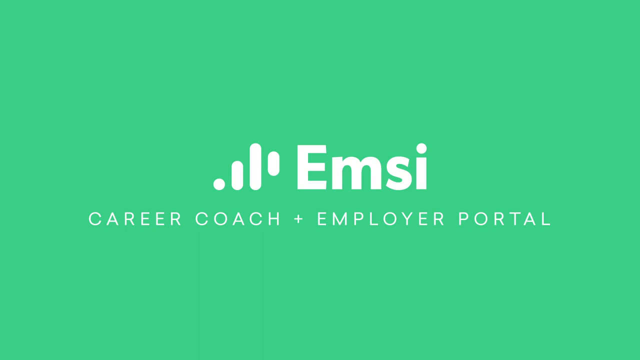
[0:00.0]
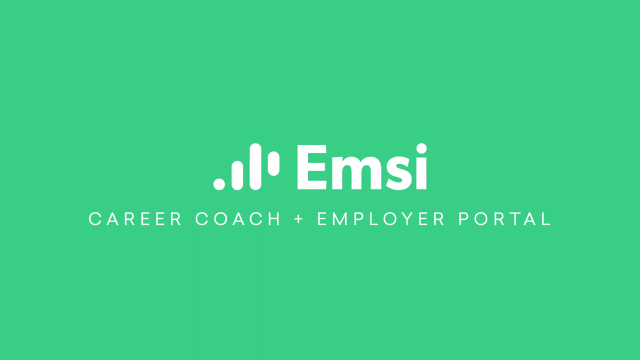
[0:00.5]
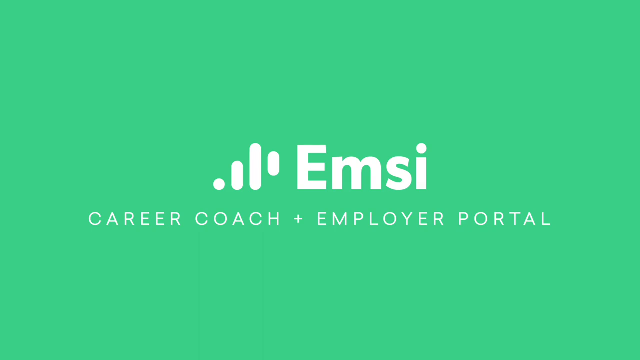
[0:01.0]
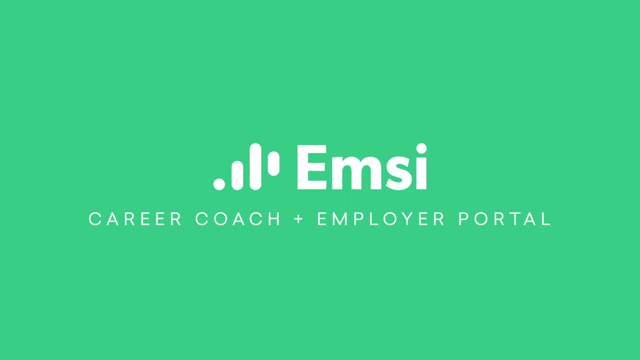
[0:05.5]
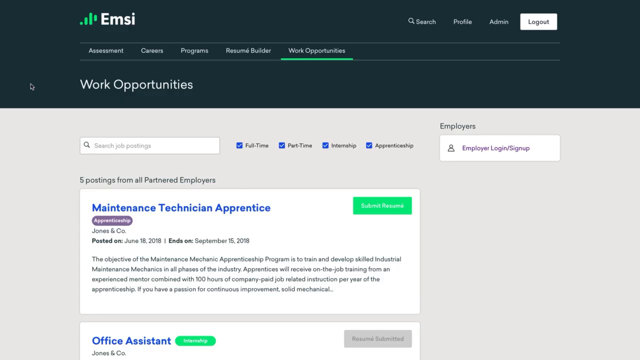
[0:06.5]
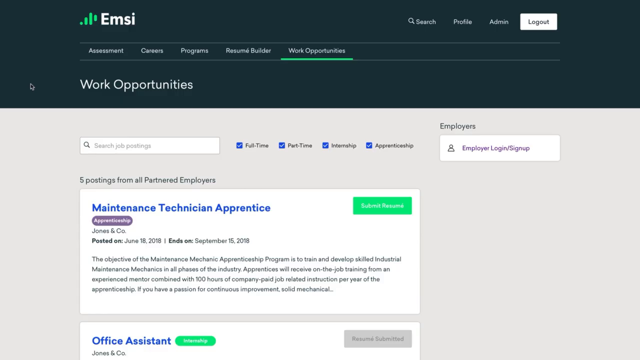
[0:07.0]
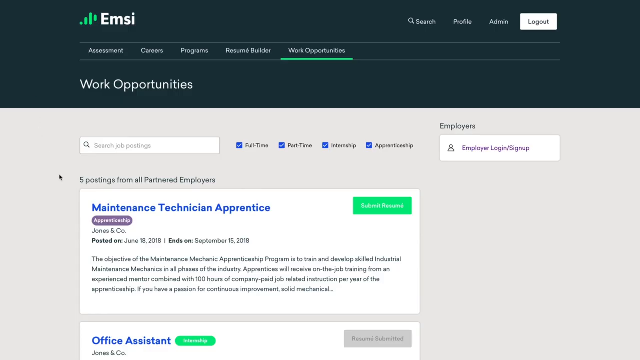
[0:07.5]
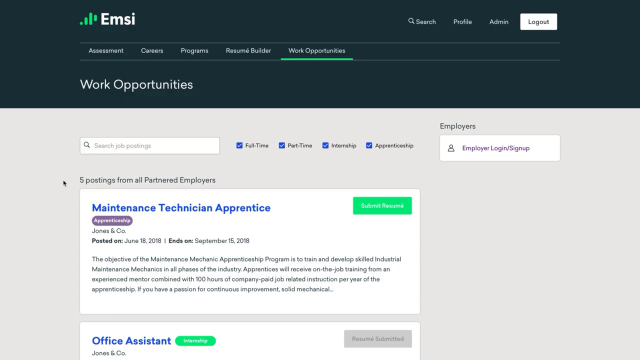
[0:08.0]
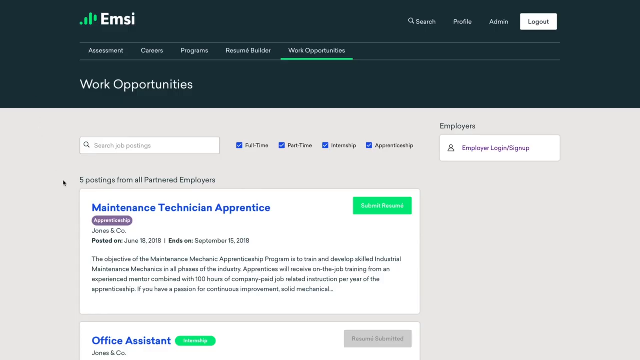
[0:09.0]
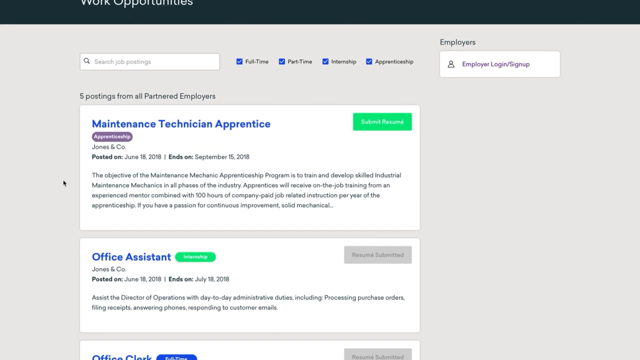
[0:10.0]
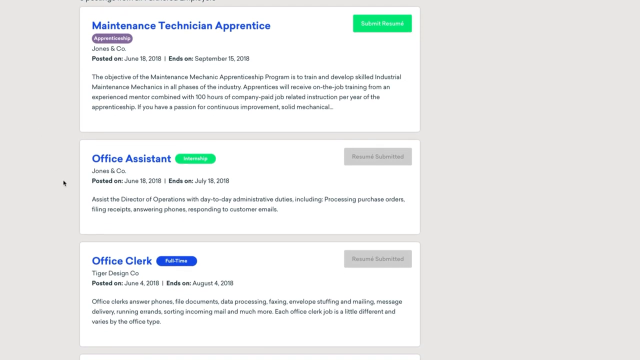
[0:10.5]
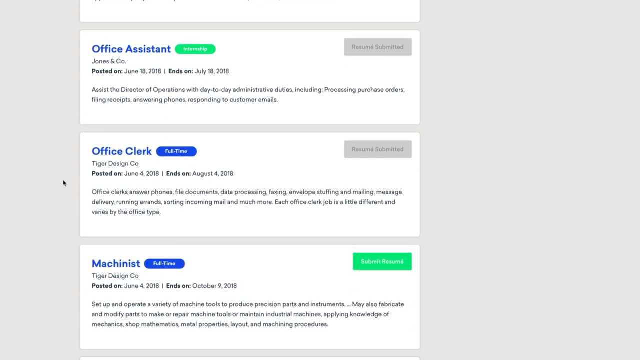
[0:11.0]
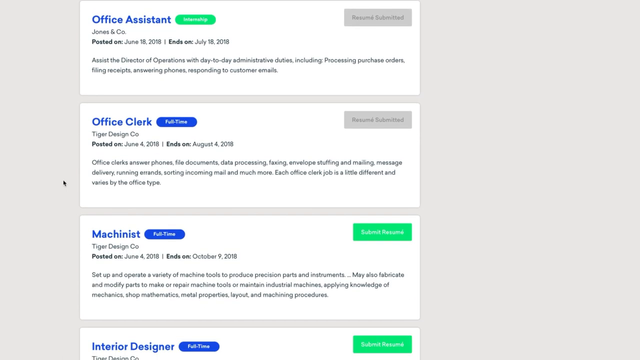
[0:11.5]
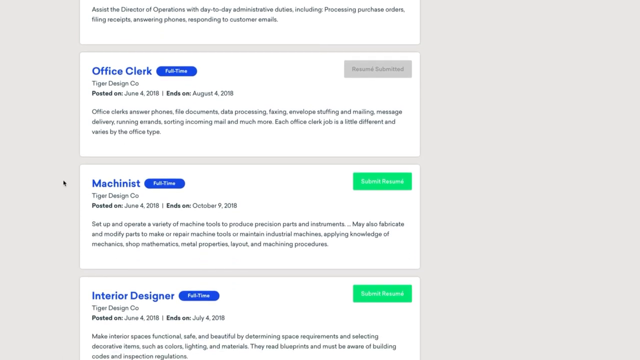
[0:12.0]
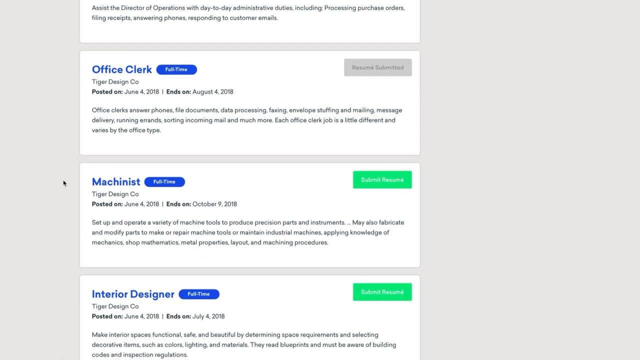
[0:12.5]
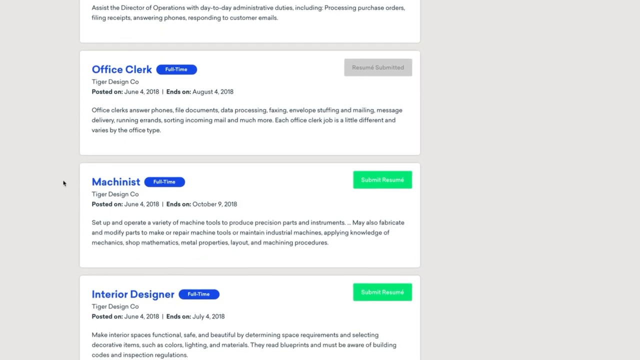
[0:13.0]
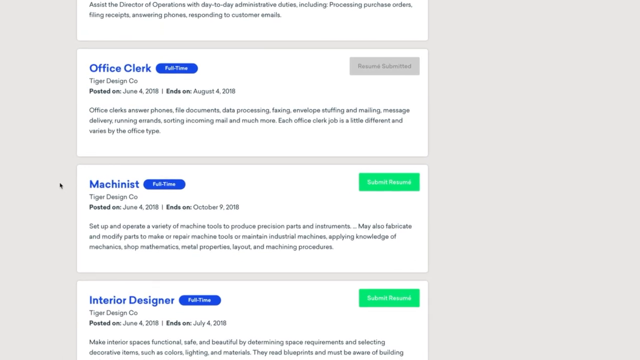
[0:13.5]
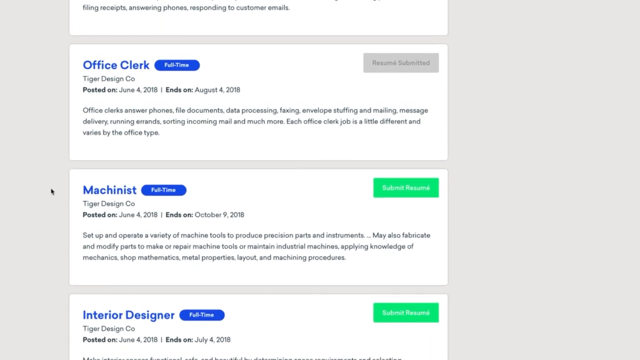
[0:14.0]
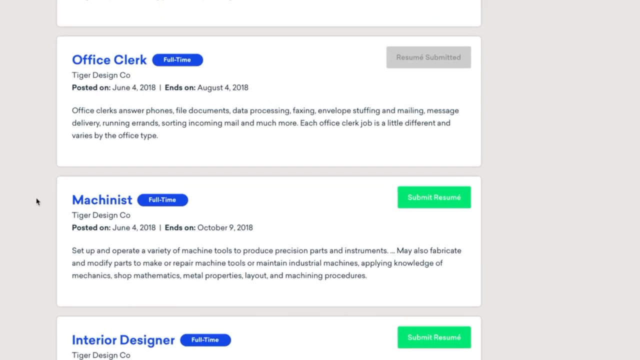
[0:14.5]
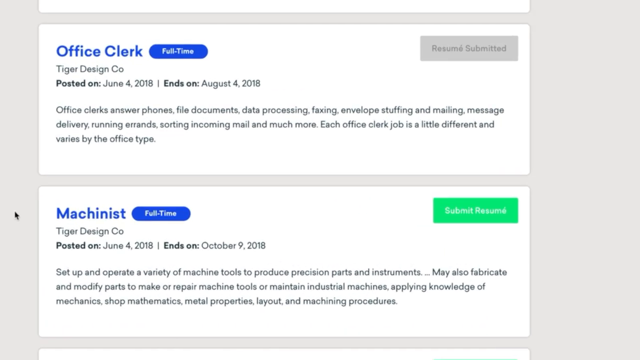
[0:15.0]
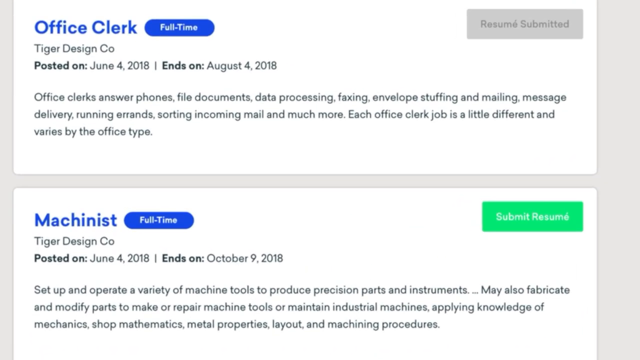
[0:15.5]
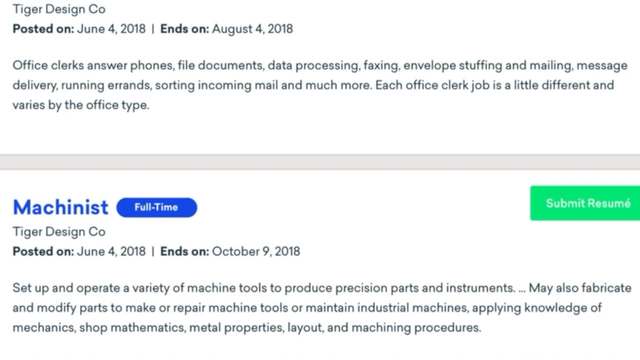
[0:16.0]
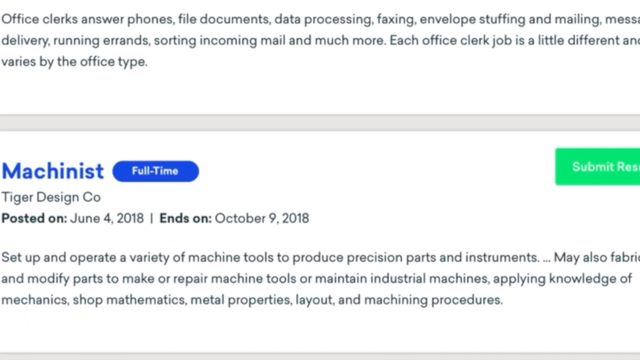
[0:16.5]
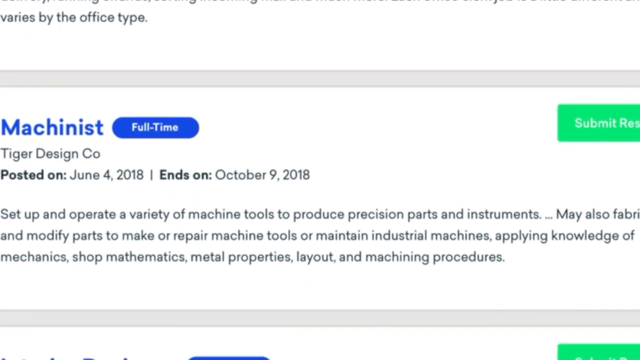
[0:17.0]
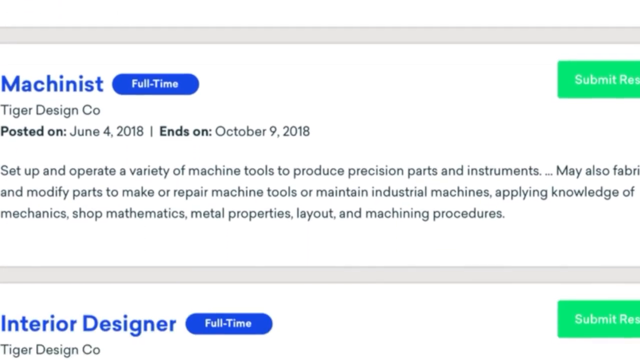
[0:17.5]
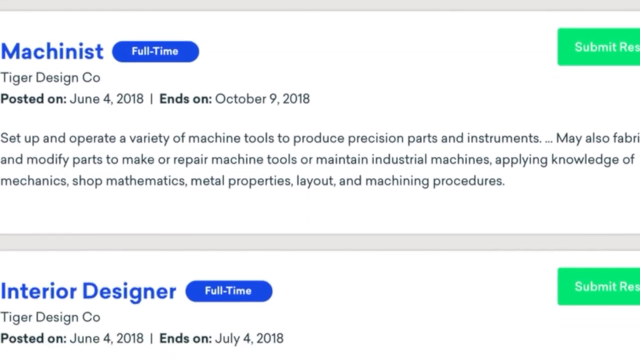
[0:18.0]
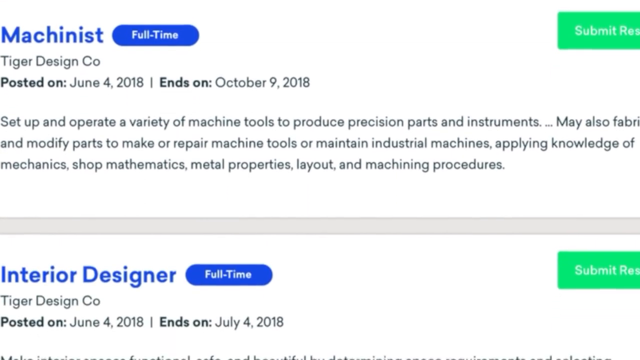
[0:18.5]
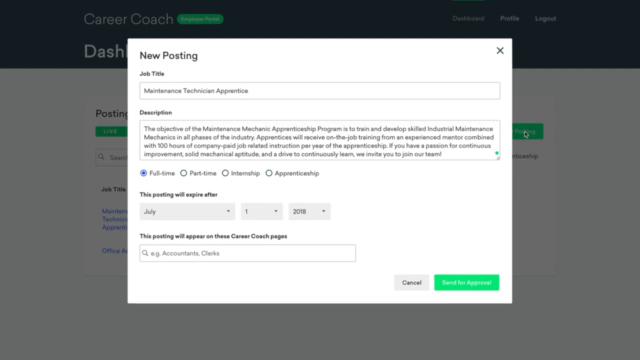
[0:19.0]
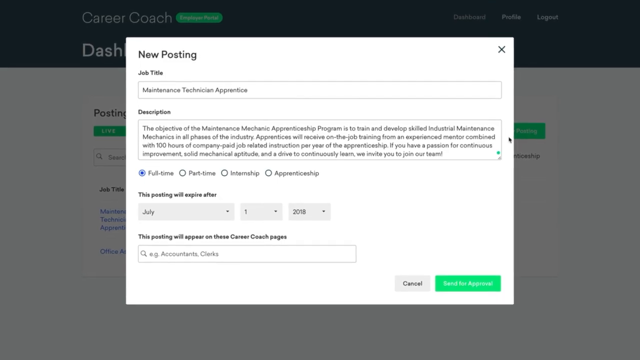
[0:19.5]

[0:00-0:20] A green screen shows a white logo for MC, with the slogan "Career Coach plus Employer Portal" under it. The logo disappears and the MC web page appears. The MC logo is at the top of the page, and on the top right are options for search, profile, admin, and logout. Below that is a nav bar with the options assessment, career, programs, resume builder, and work opportunities. The user is on the work opportunities page, which has a search field at the top and four checkboxes labeled full-time, part-time, internship, and apprenticeship. To the right is an employers section with the option employer login or sign up. The page has five postings from all partnered employers; the one on screen says "maintenance technician apprentice." The user scrolls down to show more employment opportunities: Office Assistant, Office Clerk, Machinist, and Interior Designer. The camera zooms in on these job postings.